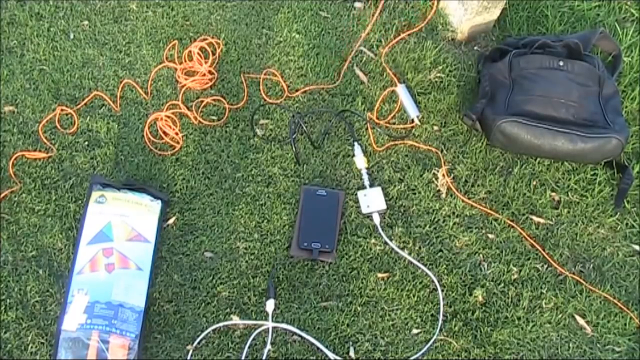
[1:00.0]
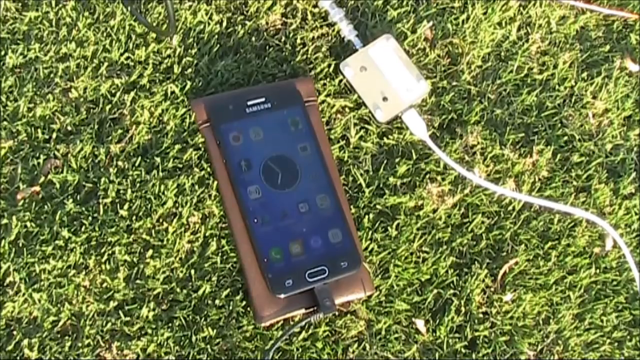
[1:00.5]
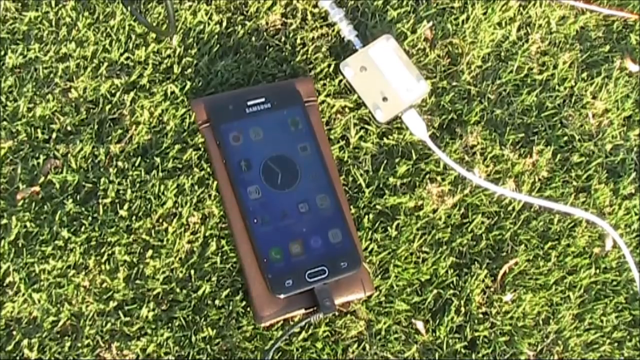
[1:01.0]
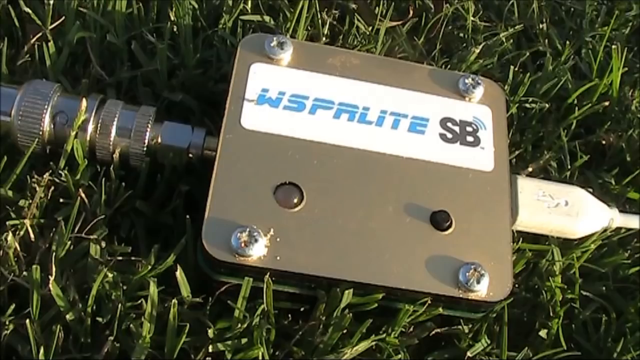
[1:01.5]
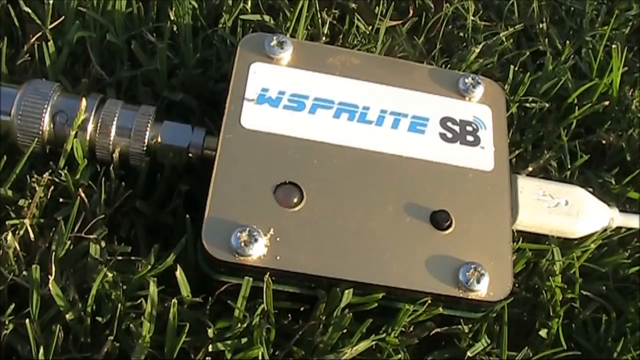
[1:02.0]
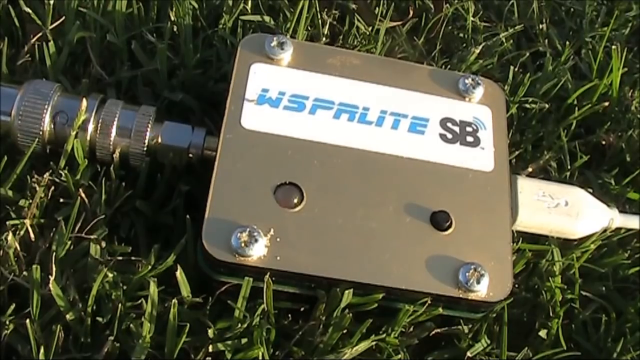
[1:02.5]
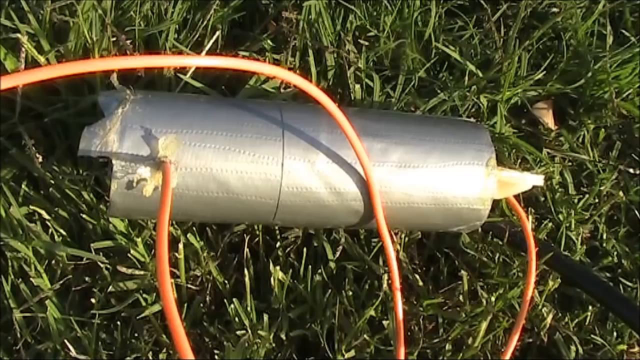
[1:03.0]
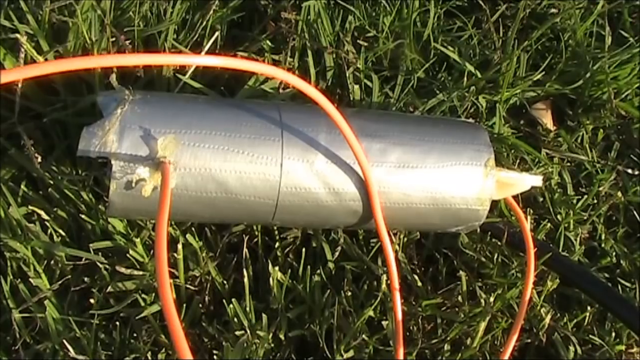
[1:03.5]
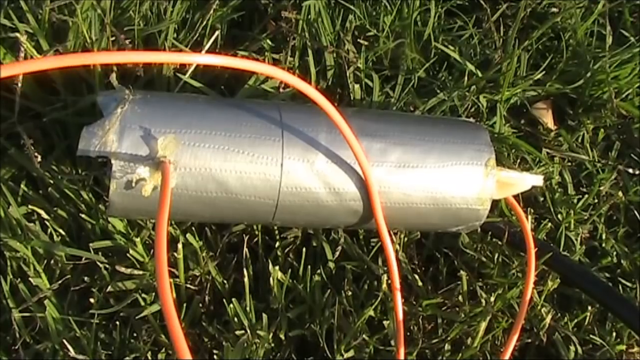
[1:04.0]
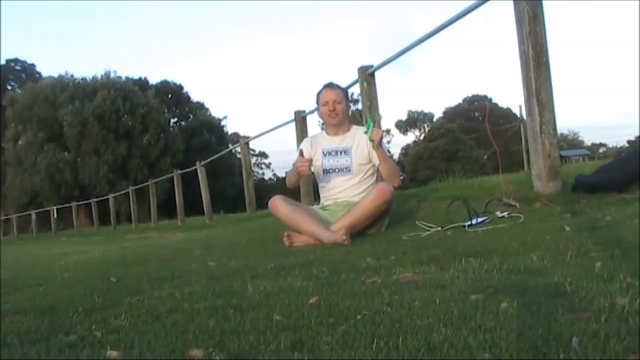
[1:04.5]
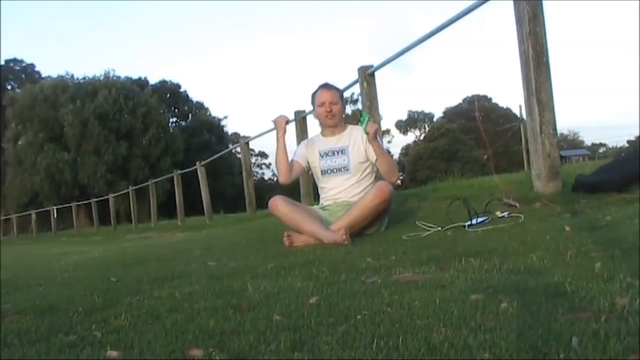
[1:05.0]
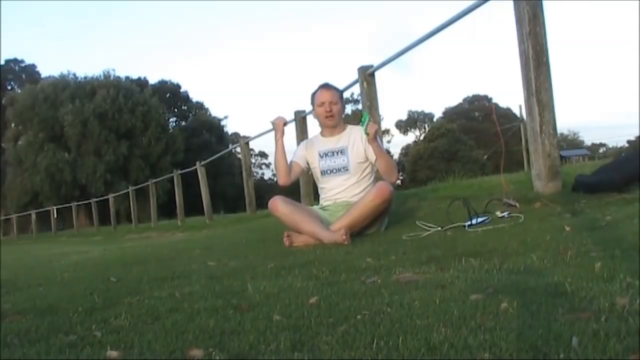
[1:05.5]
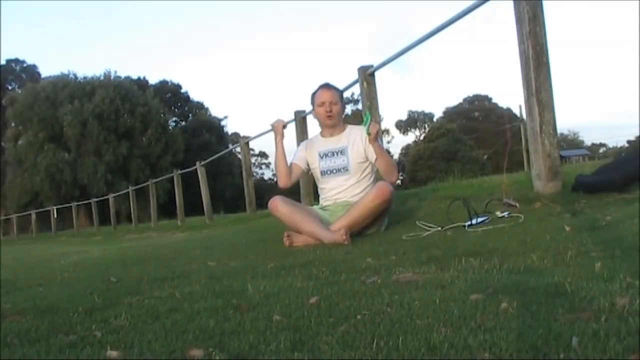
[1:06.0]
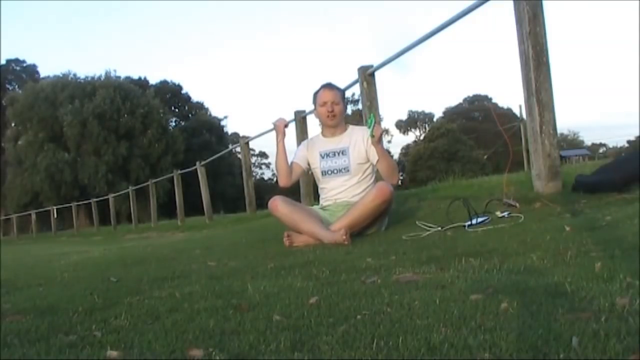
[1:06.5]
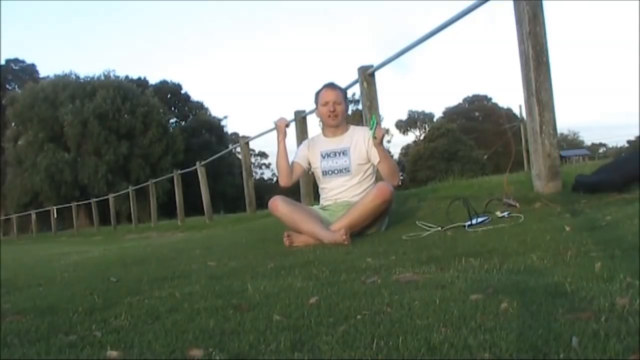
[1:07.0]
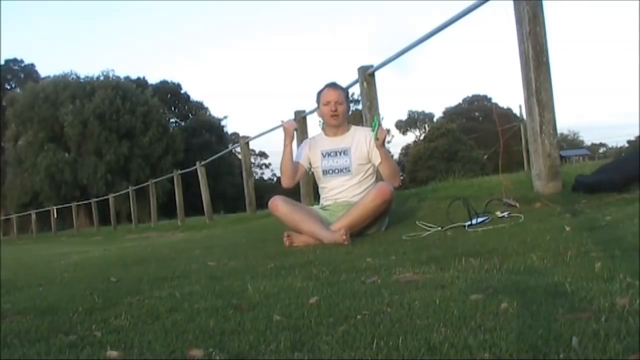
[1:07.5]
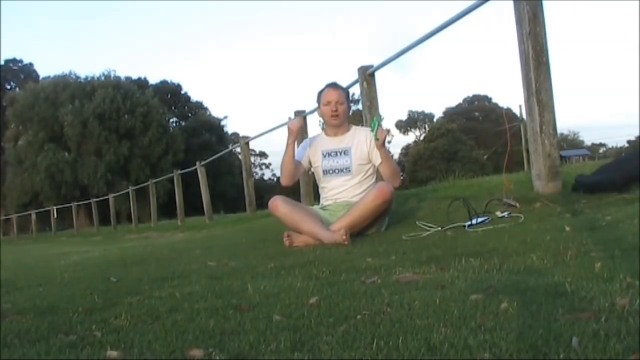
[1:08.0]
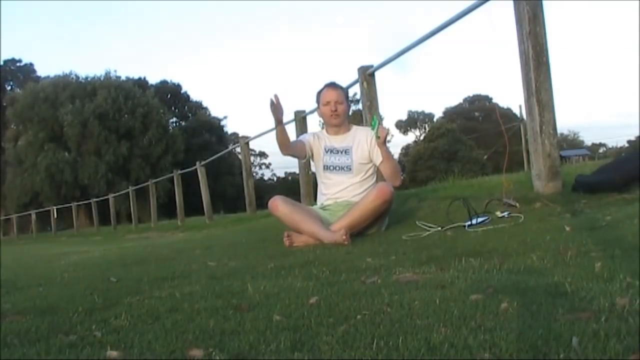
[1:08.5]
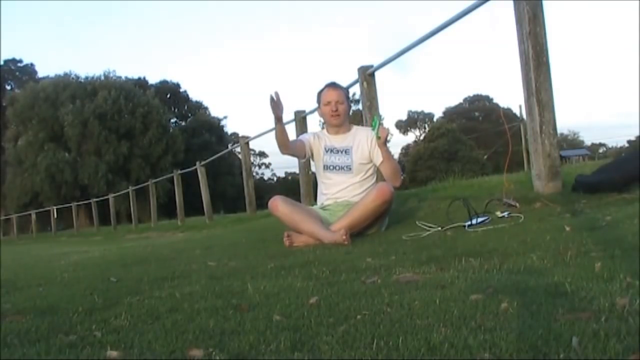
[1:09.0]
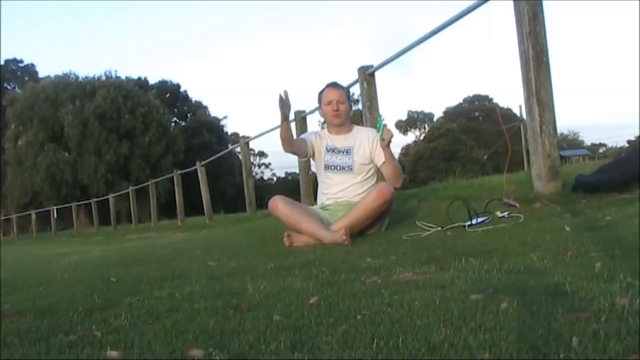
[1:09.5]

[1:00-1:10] The man has just started flying the kite, which carries some type of radio frequency device. A close-up shows the things on the ground: the kite package on the left, a lot of orange line above it, his phone under that, and what looks like a charging cord below it. To the right is another type of cord with a conical plug end, and a black cord lies randomly around. The orange cord has a white plastic piece on it. There is a fence post and a black vinyl or leather backpack. Then there is a close-up of his phone and a close-up of some type of box whose screws look stripped, suggesting it was opened before.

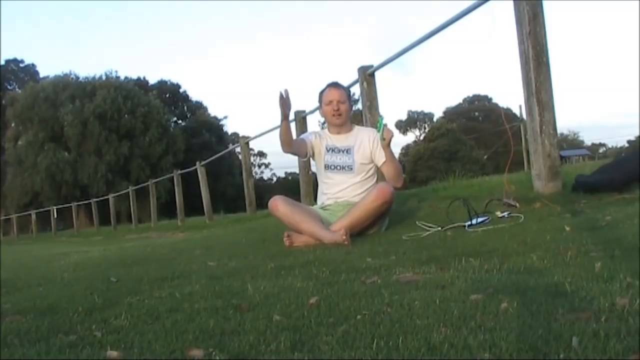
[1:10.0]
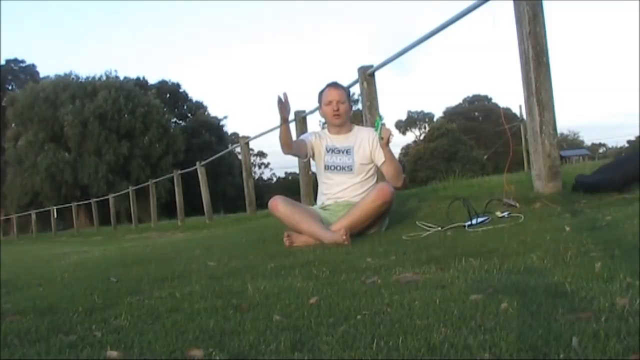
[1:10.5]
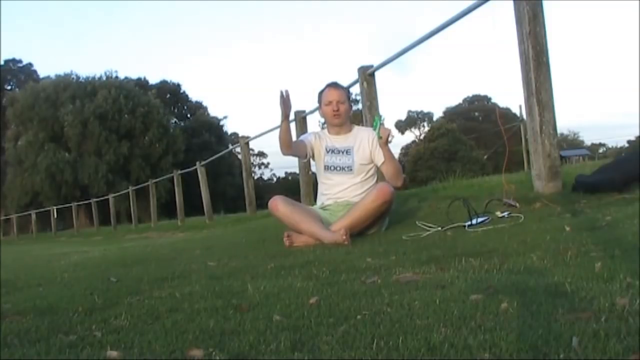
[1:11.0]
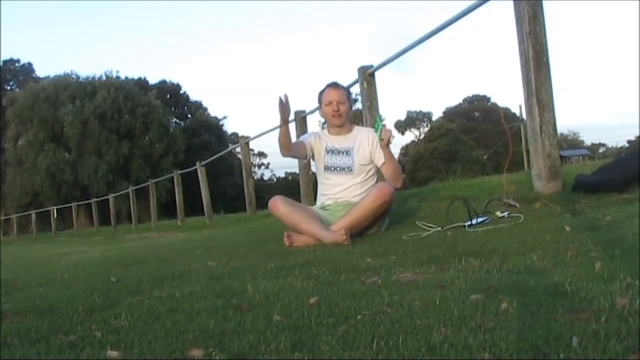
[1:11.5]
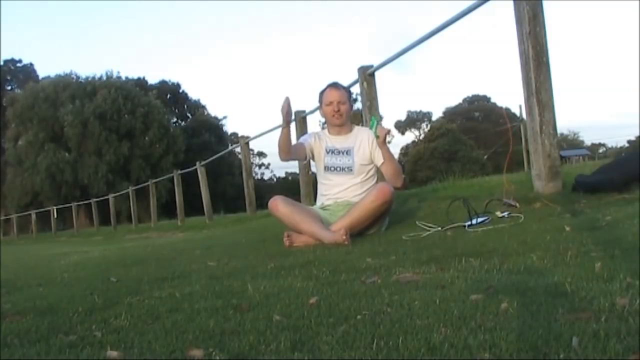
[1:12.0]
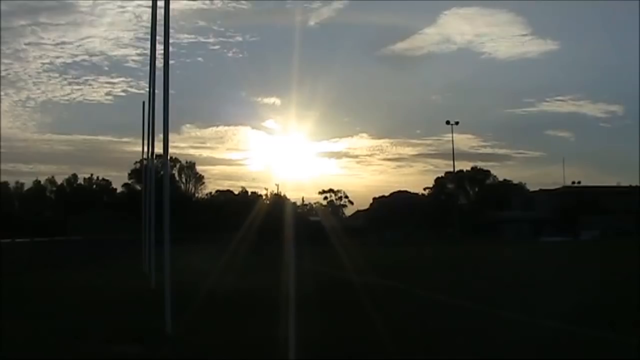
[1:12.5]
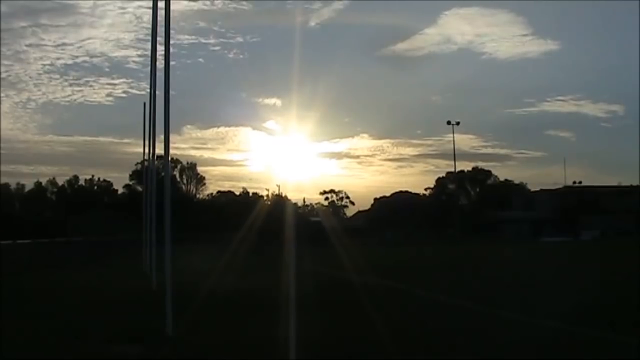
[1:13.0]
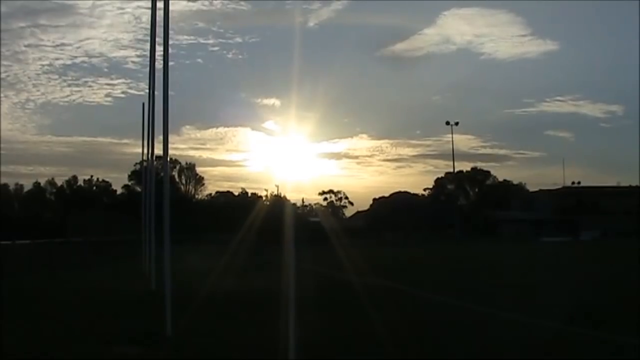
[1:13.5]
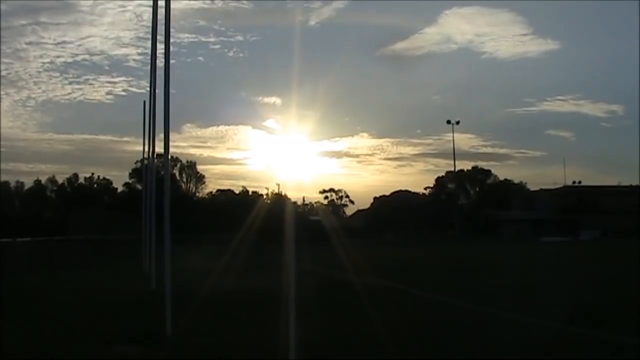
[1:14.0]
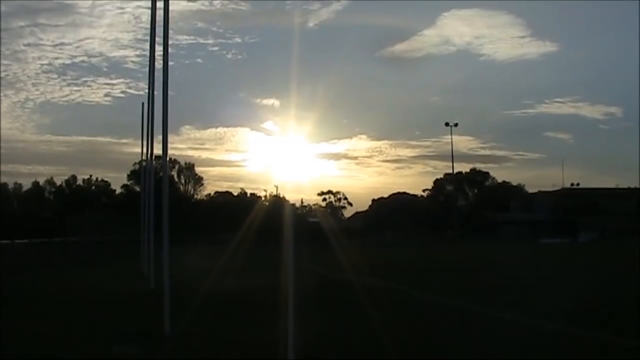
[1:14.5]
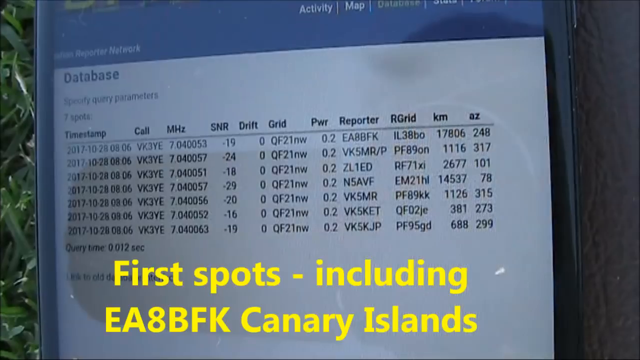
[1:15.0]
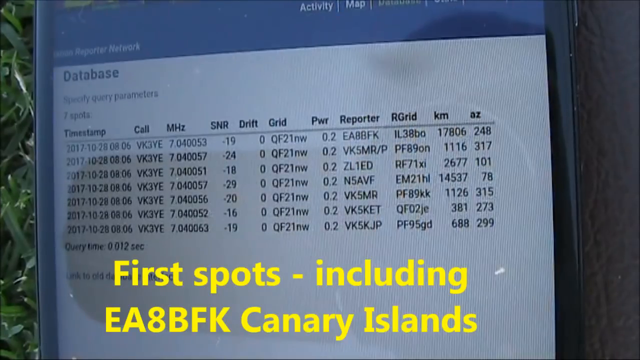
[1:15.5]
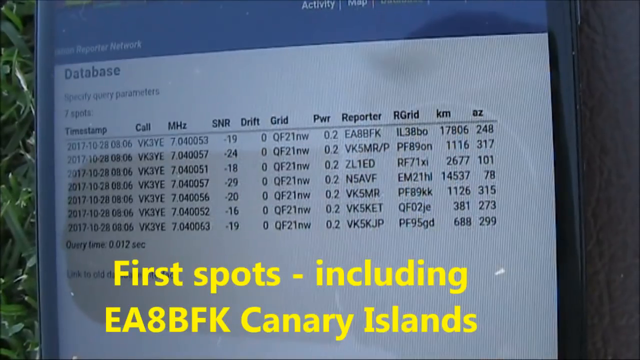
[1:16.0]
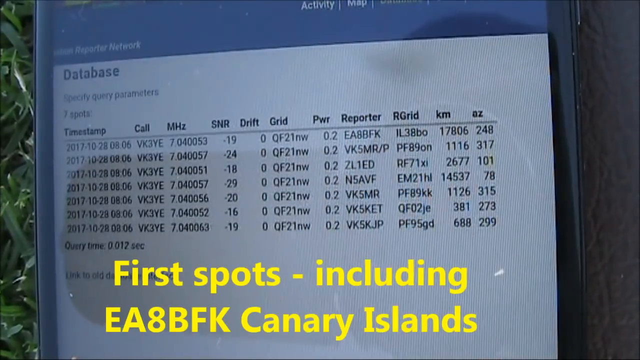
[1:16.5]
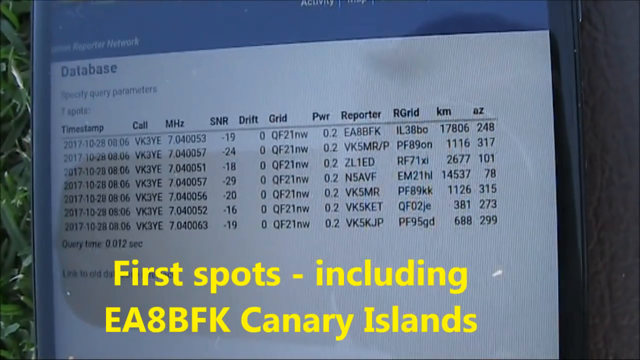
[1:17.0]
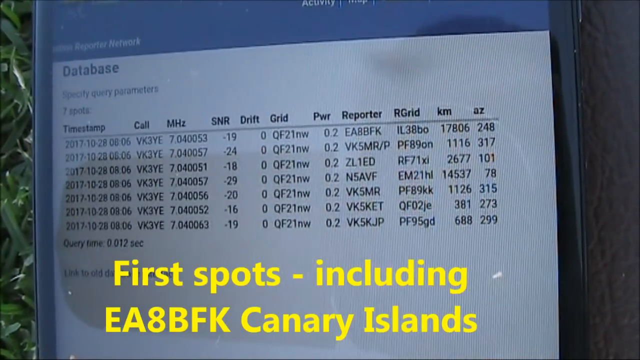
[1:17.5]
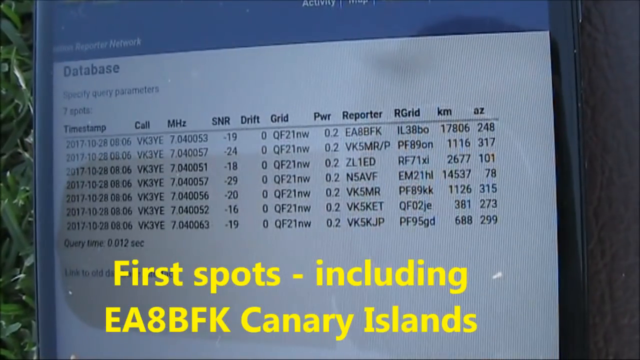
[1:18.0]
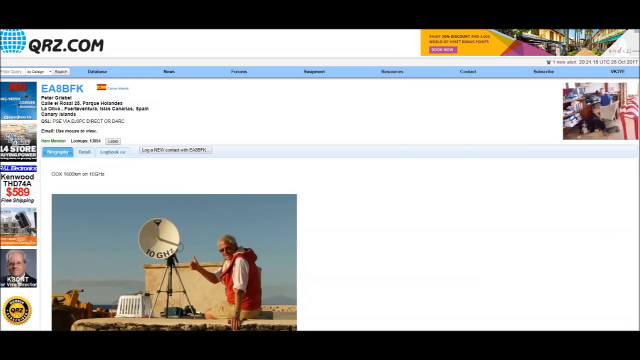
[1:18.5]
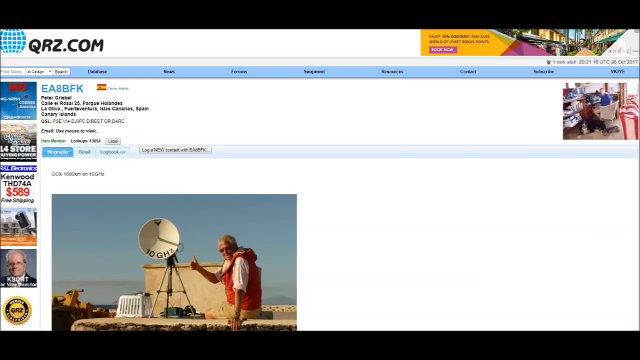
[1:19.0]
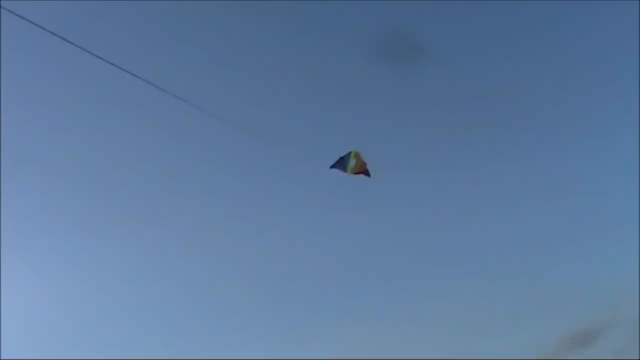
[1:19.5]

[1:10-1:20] The man sits cross-legged on the grass, barefoot, wearing green shorts and a beige t-shirt that says something with "radio books." He is white and balding but still has some brown hair. He talks with his hands, holds something in his left hand, and there are many wires on the ground. He uses his right hand to show something being flattened. The video cuts to a skyline of buildings, then to the back of a package with yellow text reading "first spots - including" and "canary islands," followed by many frequencies, timestamps and calls: a database on the back of the kite package.